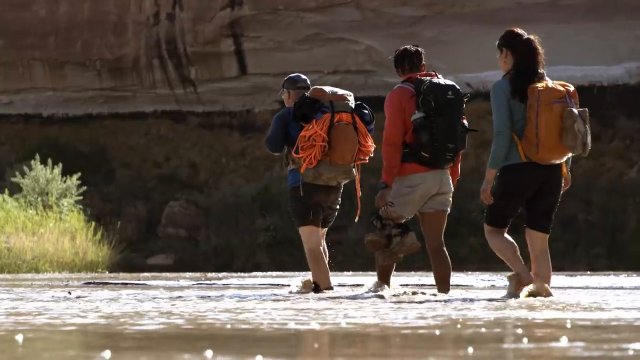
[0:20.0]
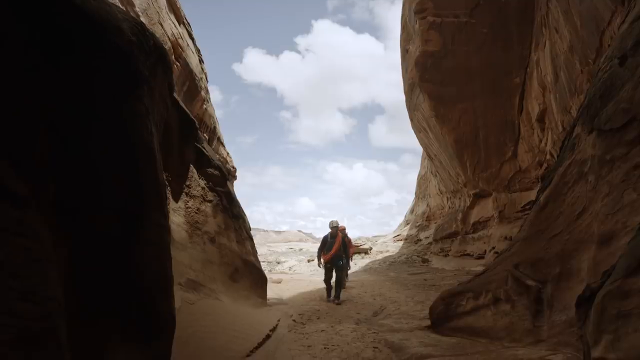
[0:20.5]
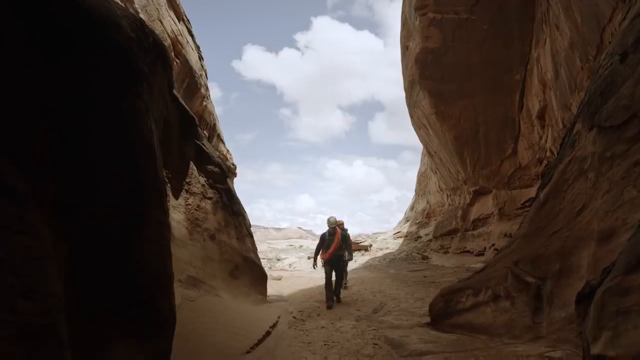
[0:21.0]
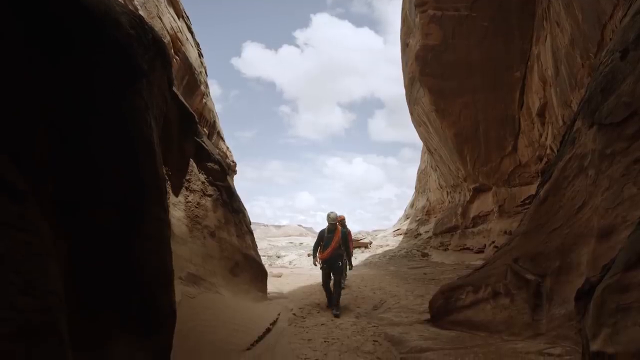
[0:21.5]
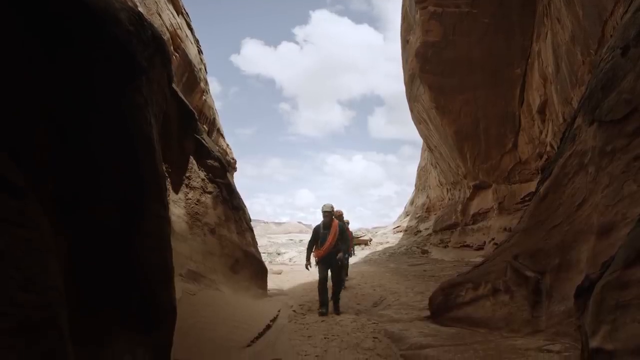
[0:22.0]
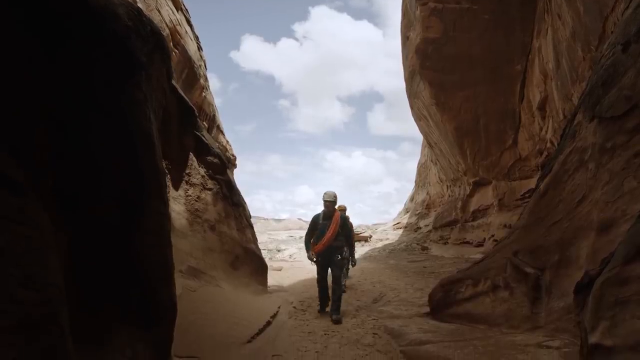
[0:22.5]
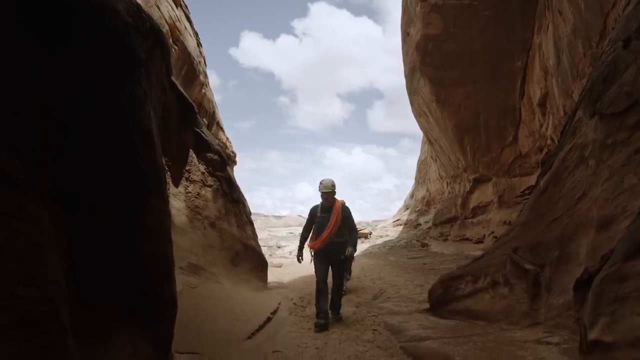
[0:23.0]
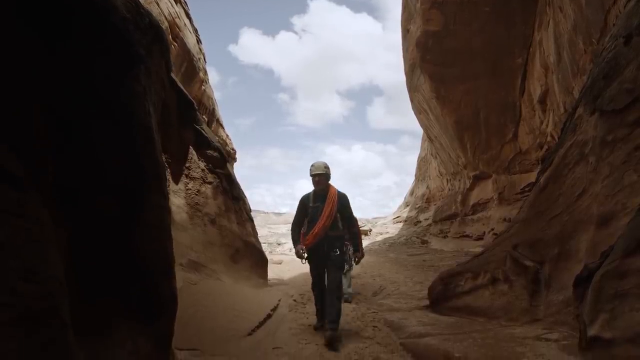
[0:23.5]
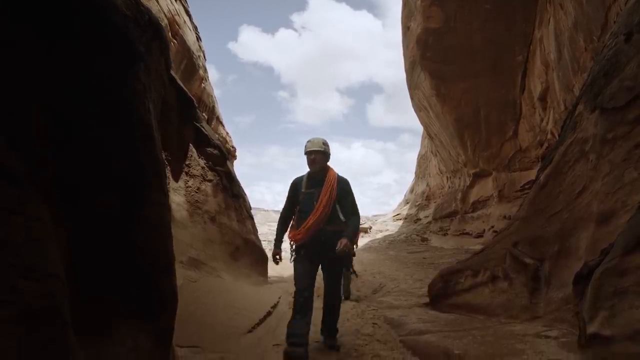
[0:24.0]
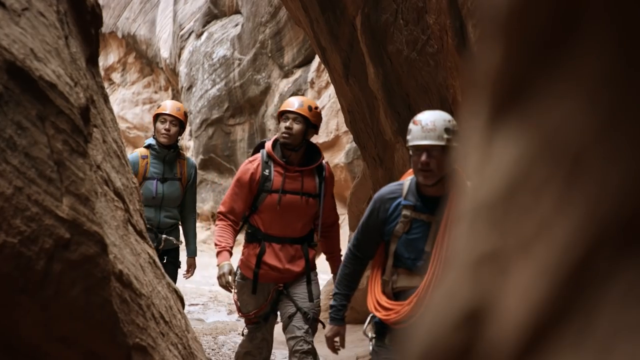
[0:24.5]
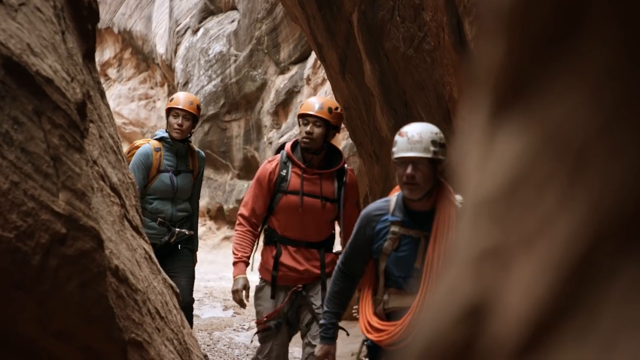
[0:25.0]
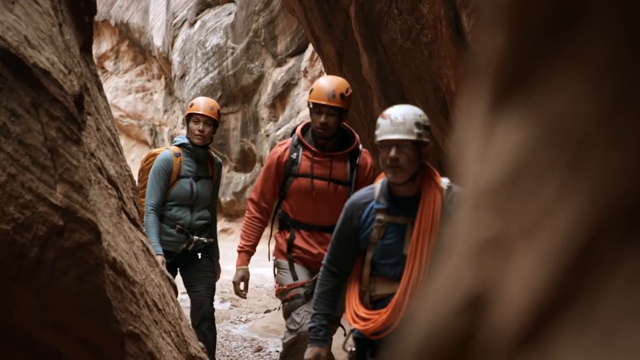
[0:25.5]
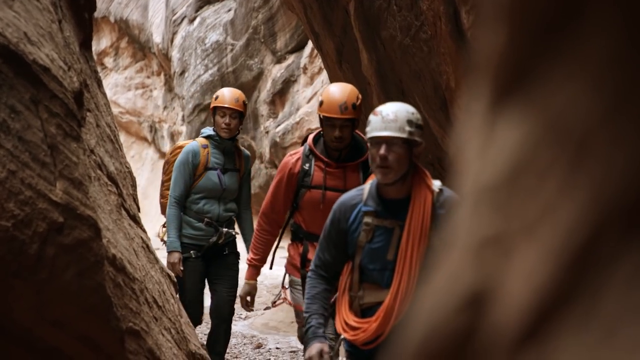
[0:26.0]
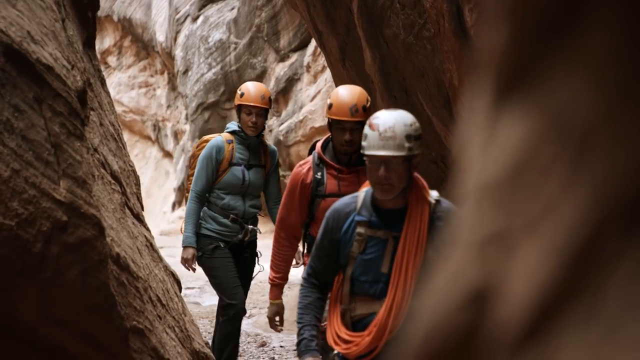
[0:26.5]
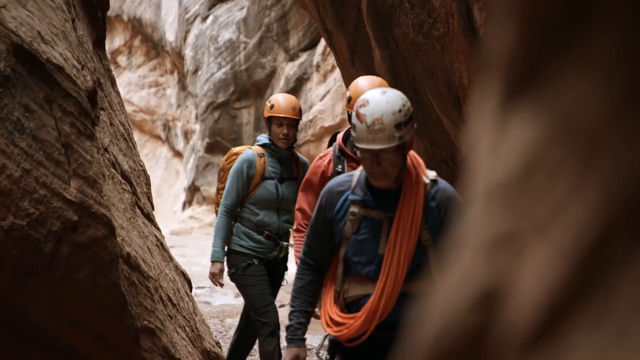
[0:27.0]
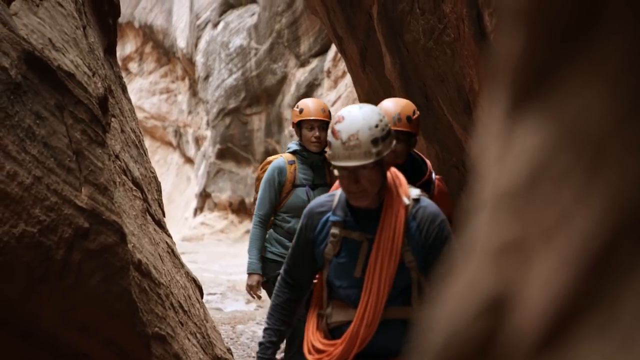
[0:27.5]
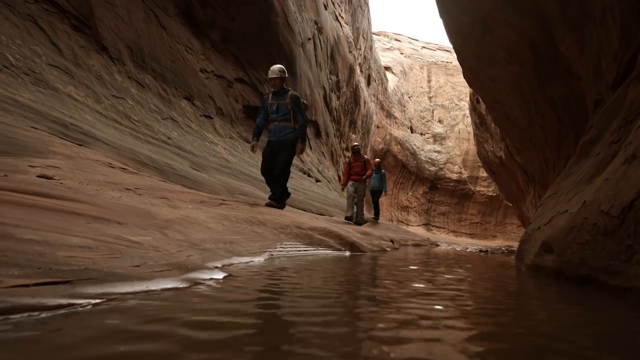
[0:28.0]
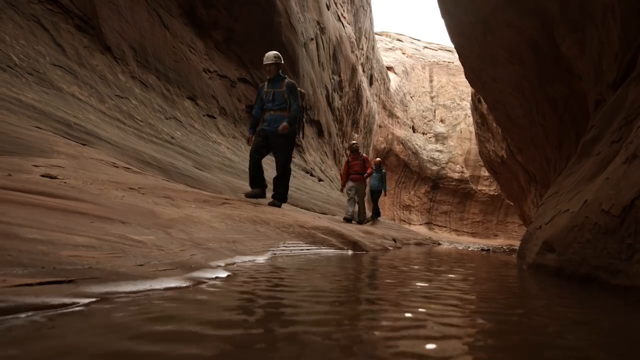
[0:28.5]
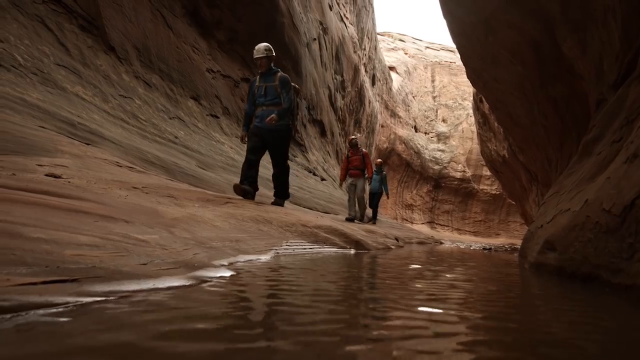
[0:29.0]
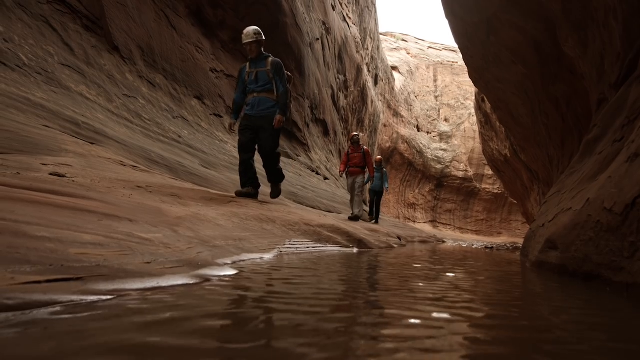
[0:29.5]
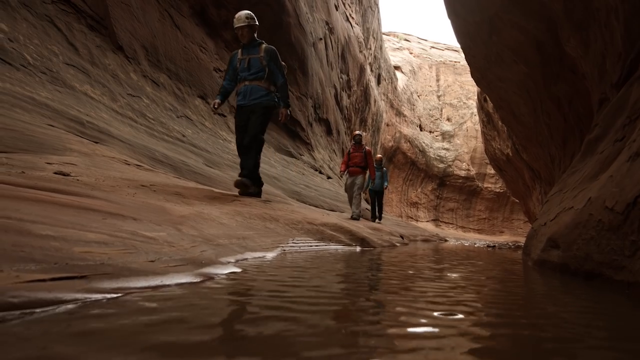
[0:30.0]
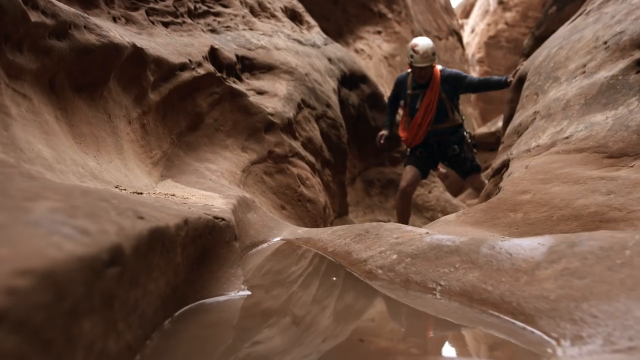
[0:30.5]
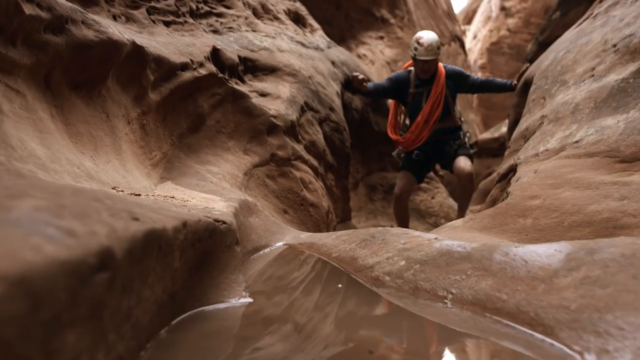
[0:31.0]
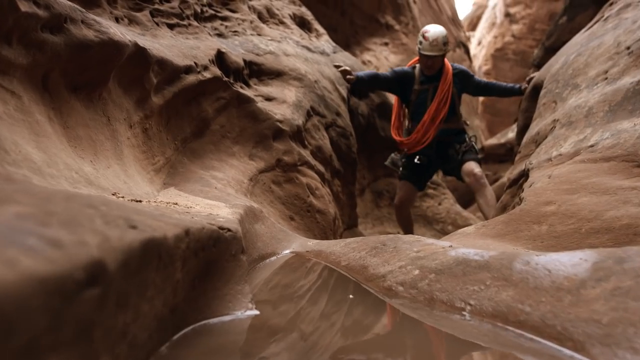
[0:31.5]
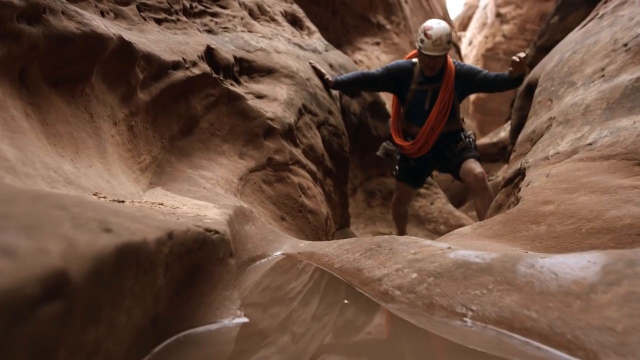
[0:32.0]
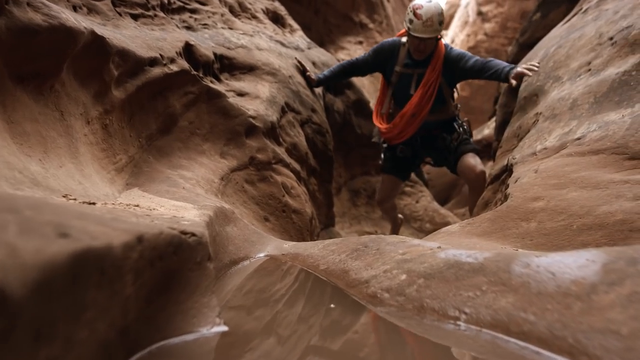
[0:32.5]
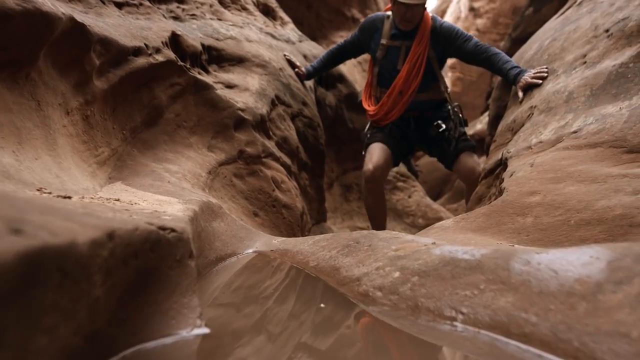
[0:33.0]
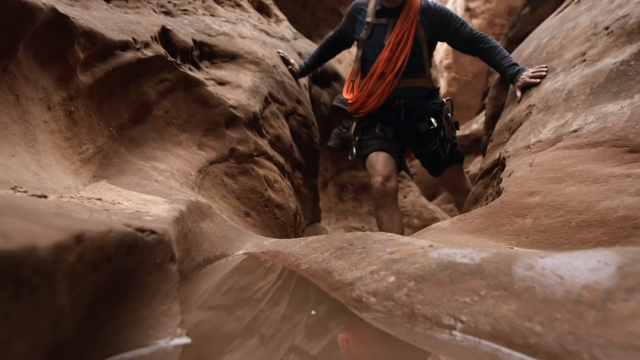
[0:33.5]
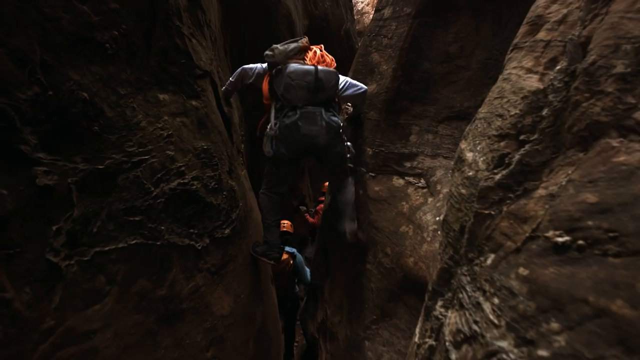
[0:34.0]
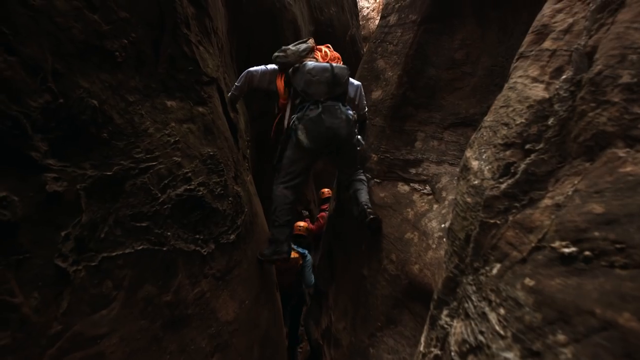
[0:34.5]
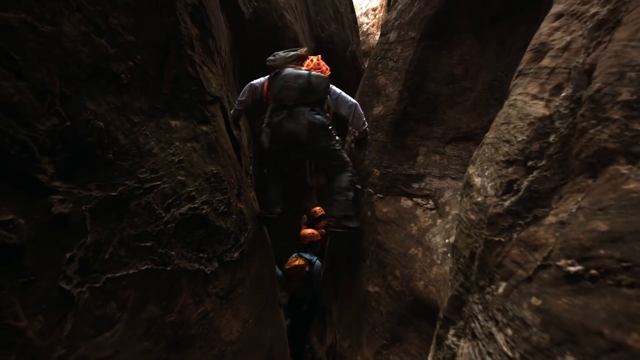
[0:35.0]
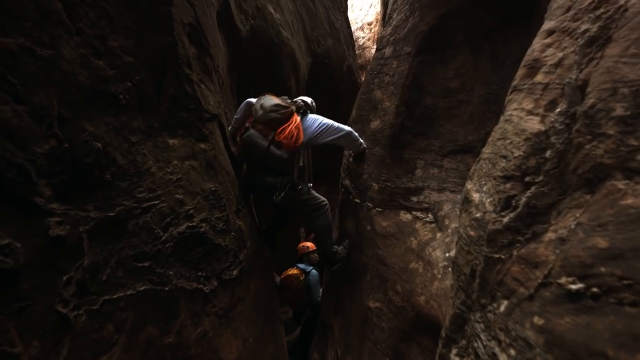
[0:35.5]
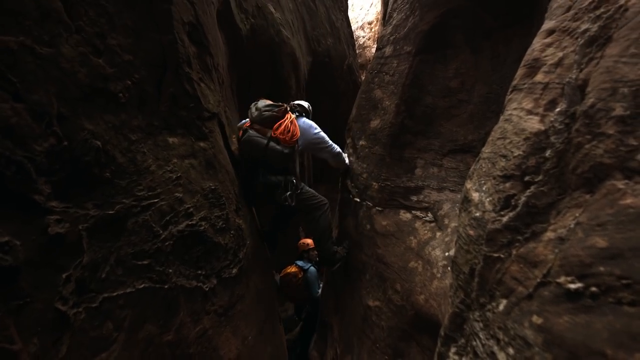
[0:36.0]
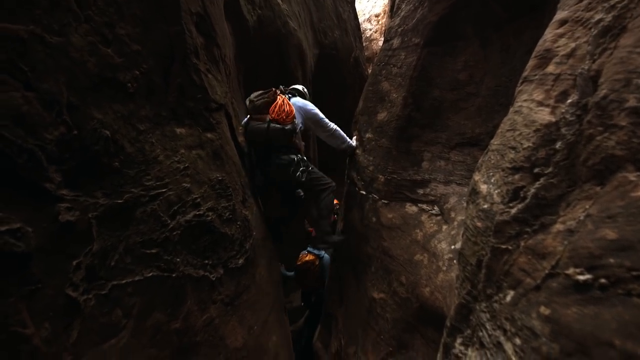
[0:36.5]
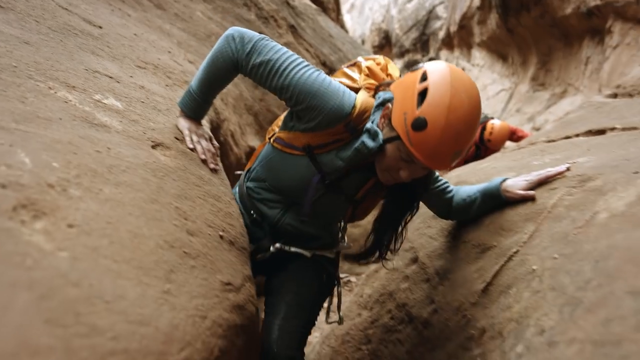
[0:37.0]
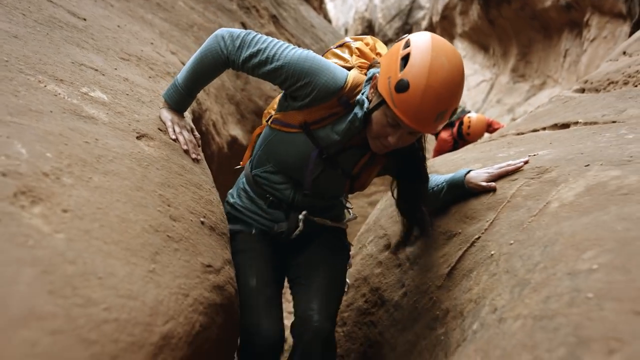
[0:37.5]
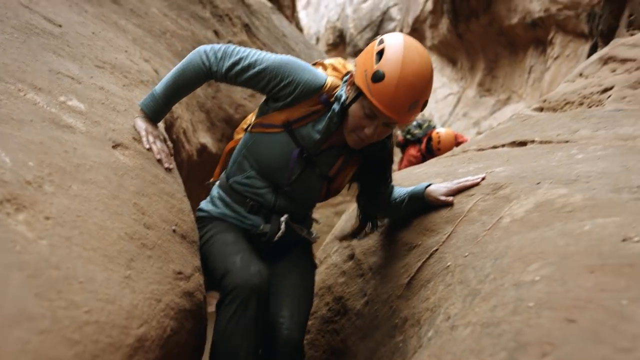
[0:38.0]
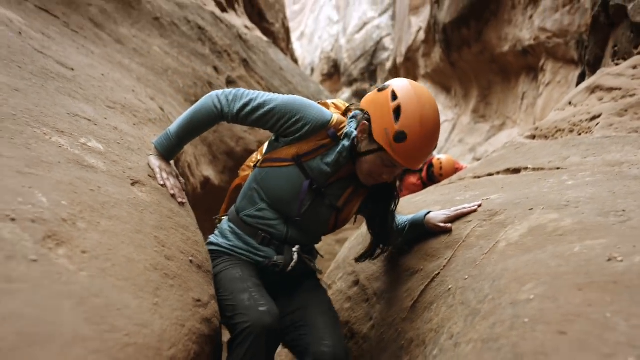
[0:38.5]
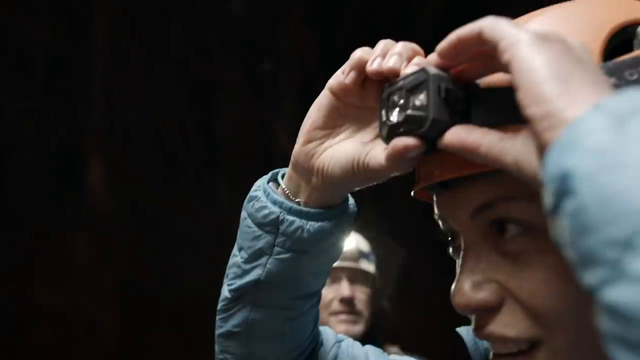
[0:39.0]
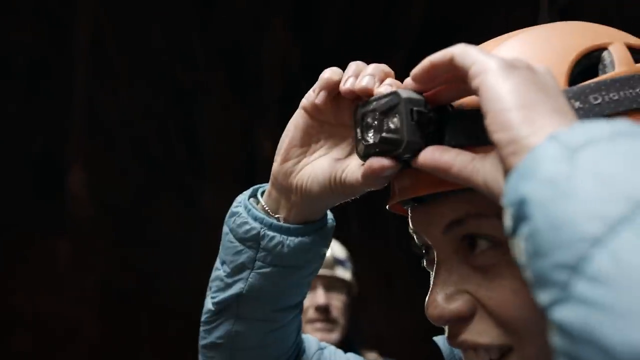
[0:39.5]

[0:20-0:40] A few people are here to climb the hill. They carry tools such as bags and cables, and they wear lights on their heads, prepared for the climb.